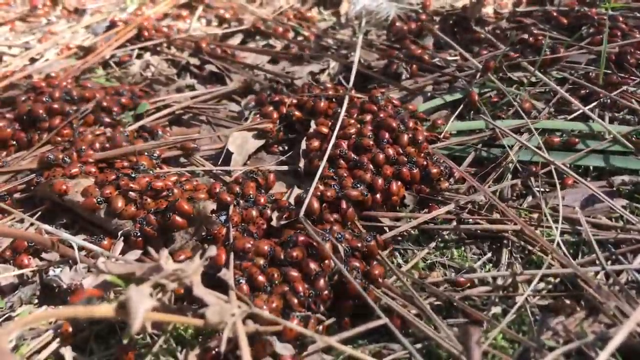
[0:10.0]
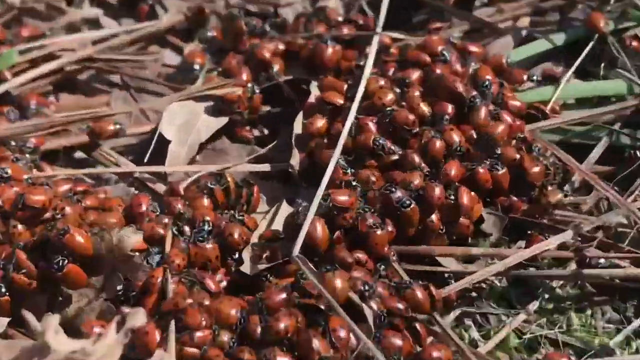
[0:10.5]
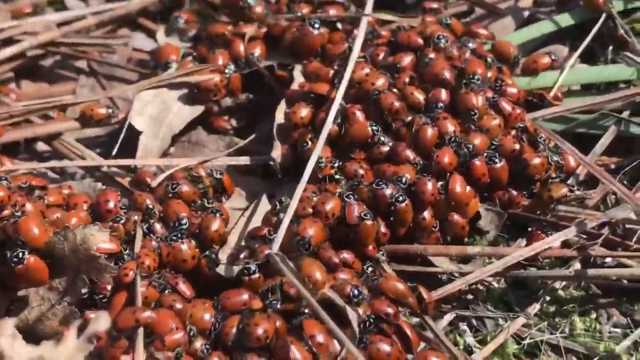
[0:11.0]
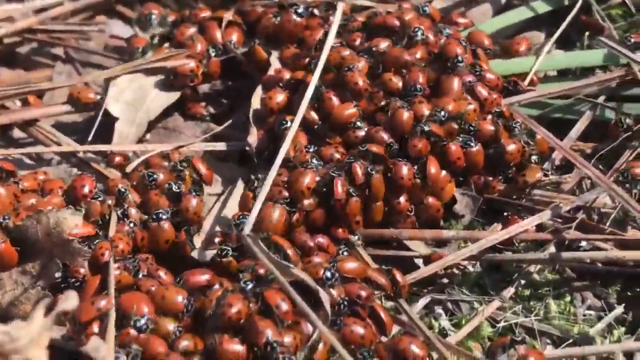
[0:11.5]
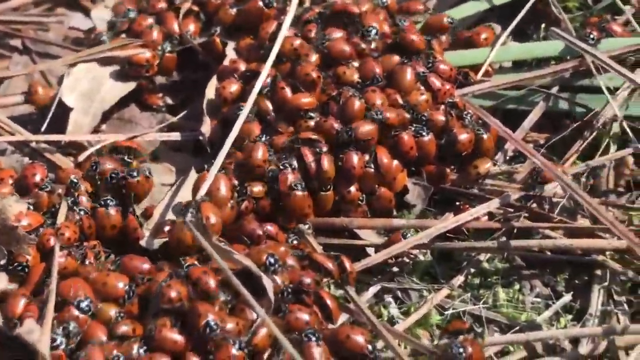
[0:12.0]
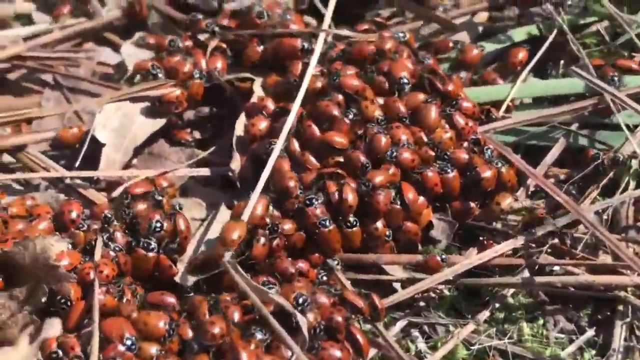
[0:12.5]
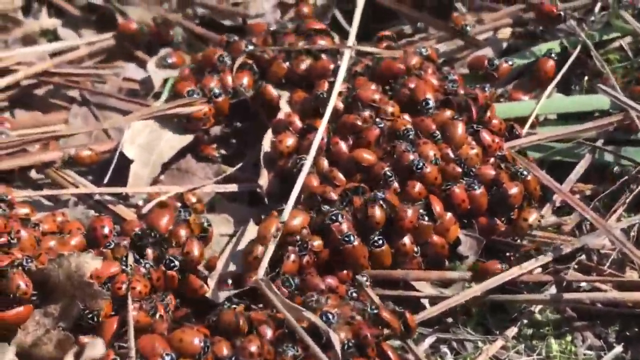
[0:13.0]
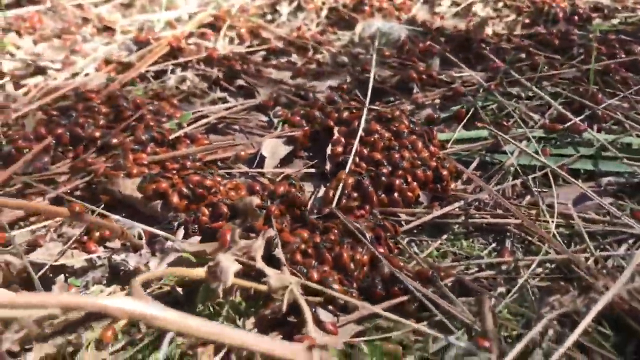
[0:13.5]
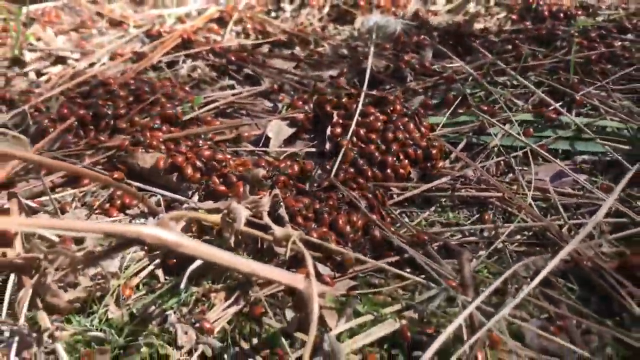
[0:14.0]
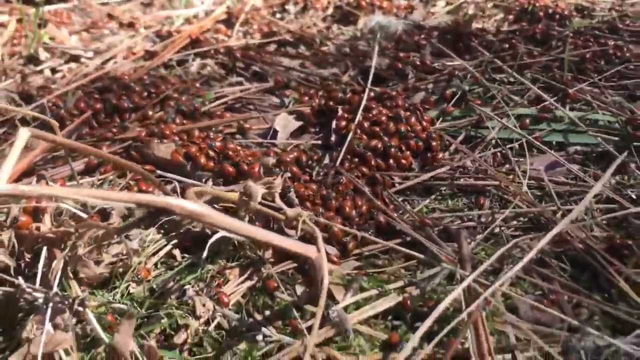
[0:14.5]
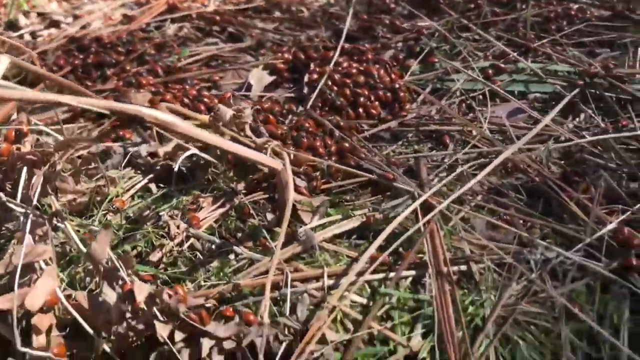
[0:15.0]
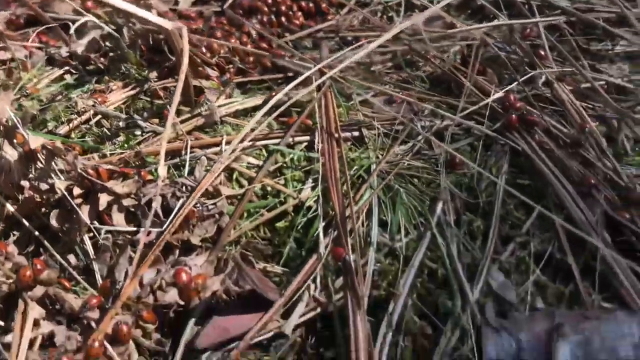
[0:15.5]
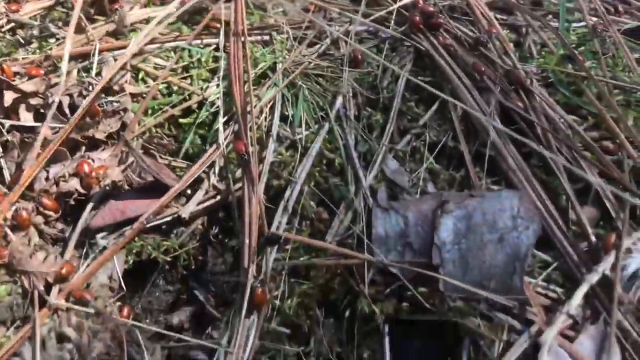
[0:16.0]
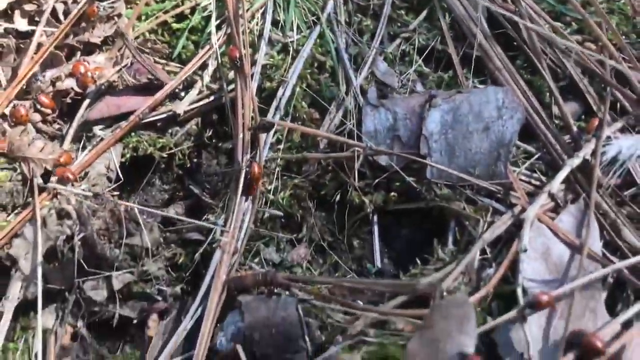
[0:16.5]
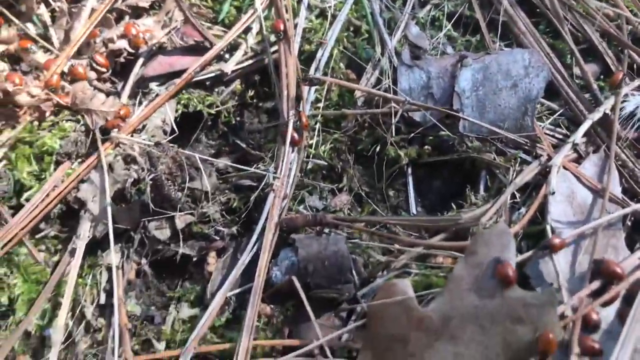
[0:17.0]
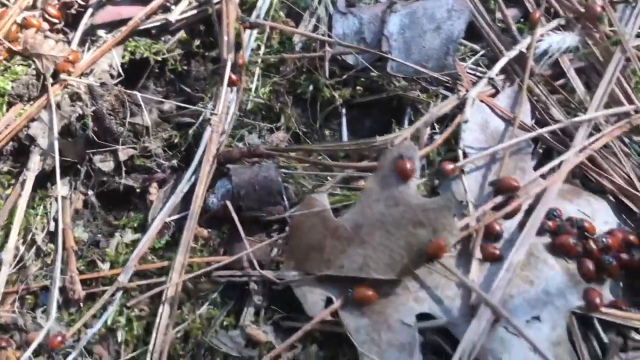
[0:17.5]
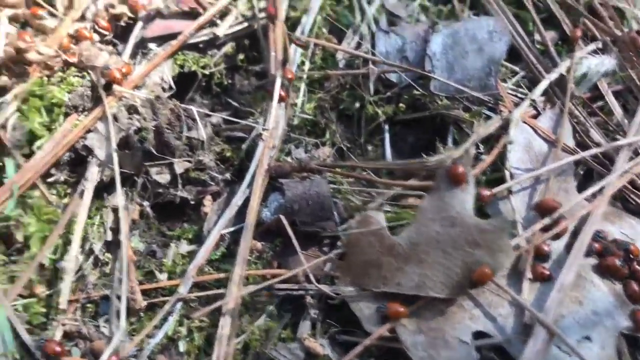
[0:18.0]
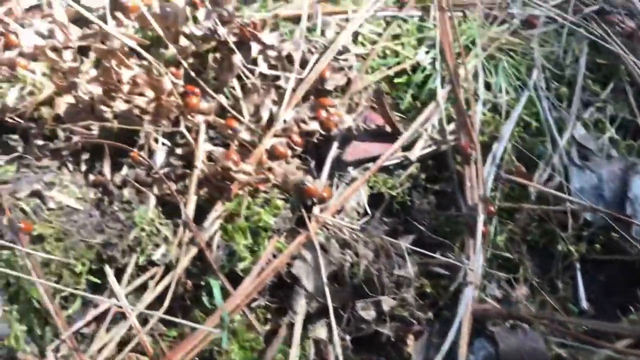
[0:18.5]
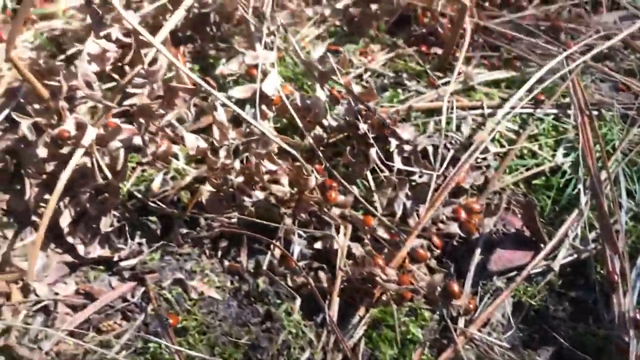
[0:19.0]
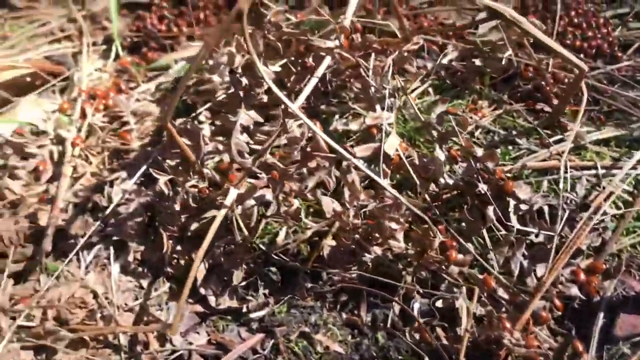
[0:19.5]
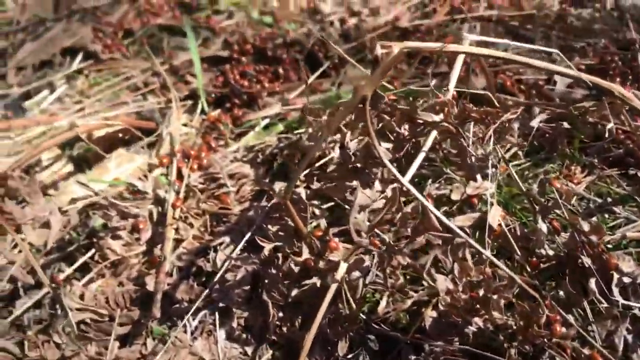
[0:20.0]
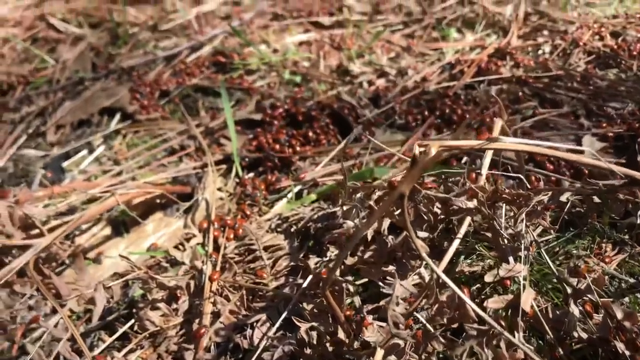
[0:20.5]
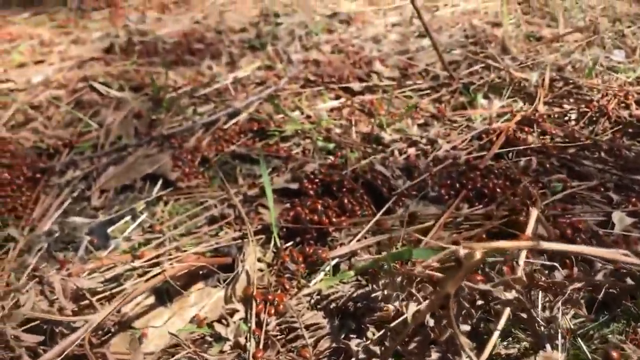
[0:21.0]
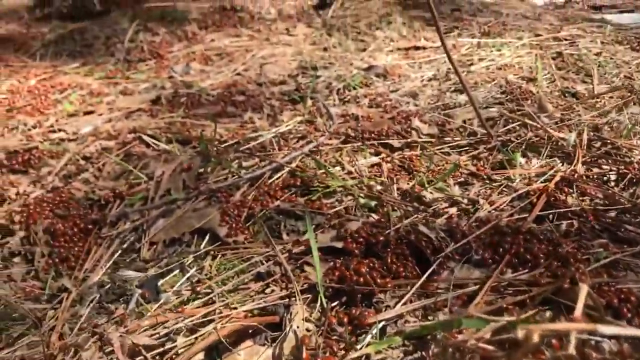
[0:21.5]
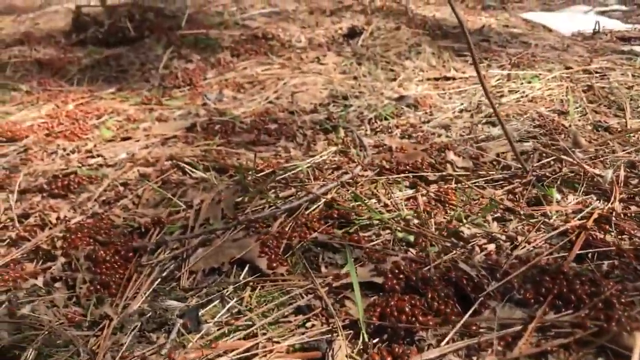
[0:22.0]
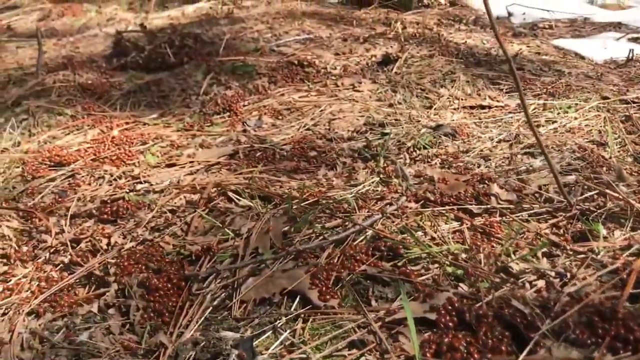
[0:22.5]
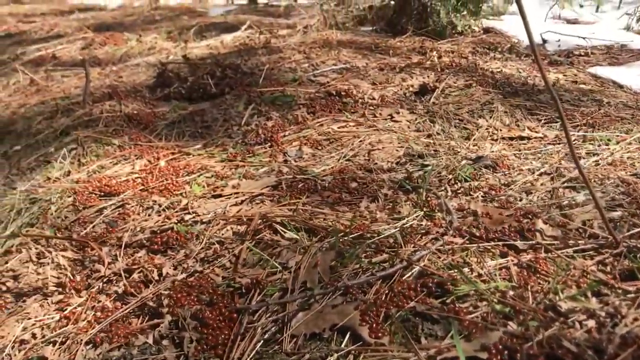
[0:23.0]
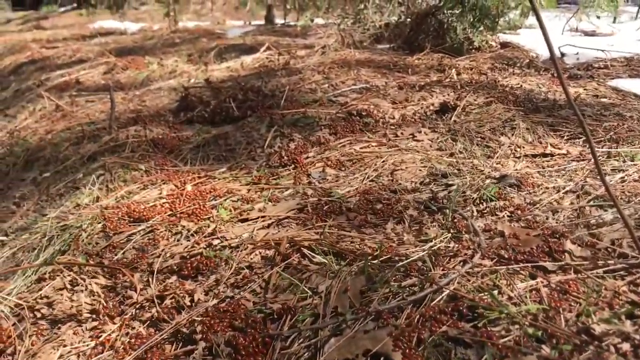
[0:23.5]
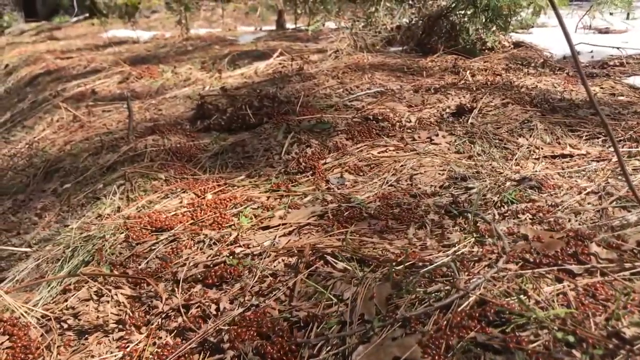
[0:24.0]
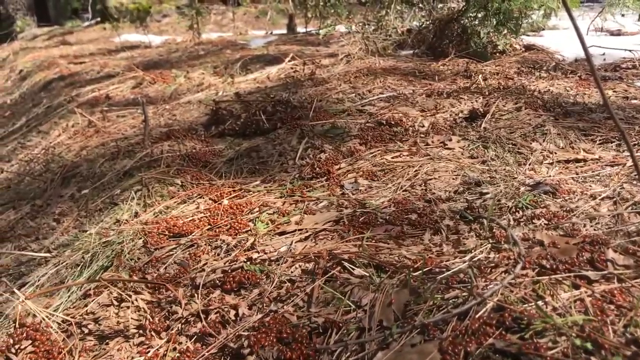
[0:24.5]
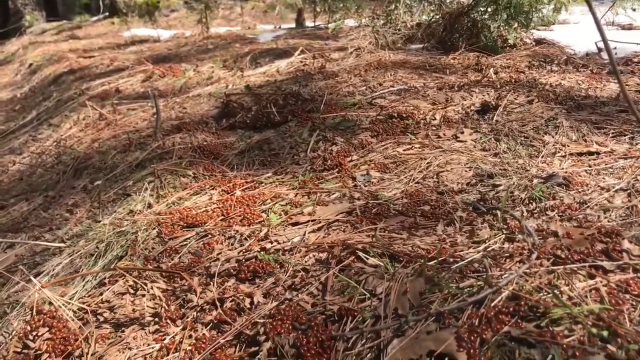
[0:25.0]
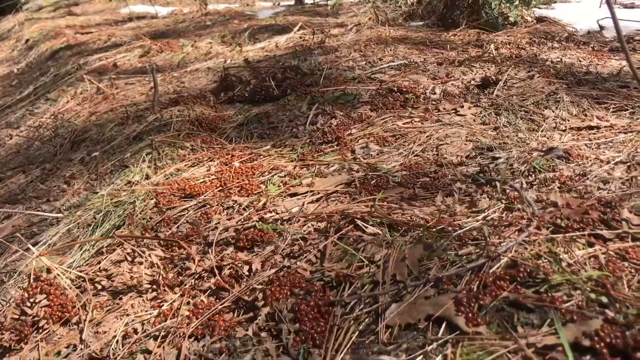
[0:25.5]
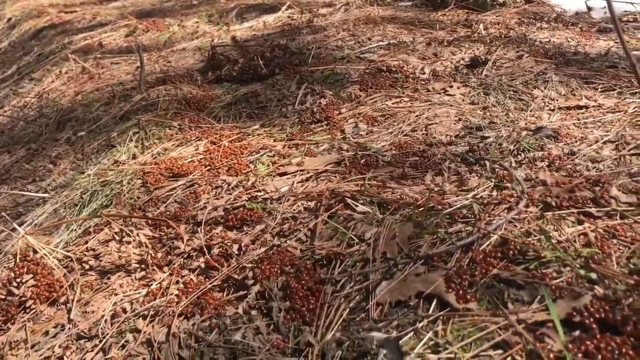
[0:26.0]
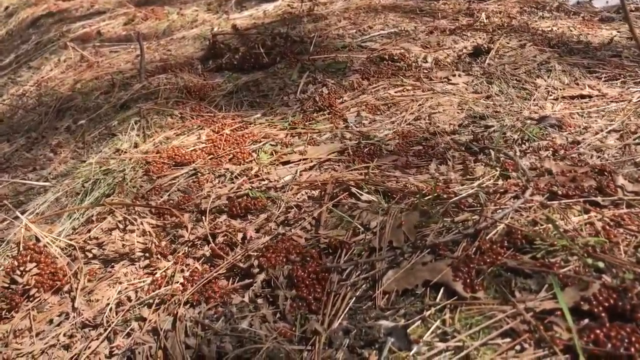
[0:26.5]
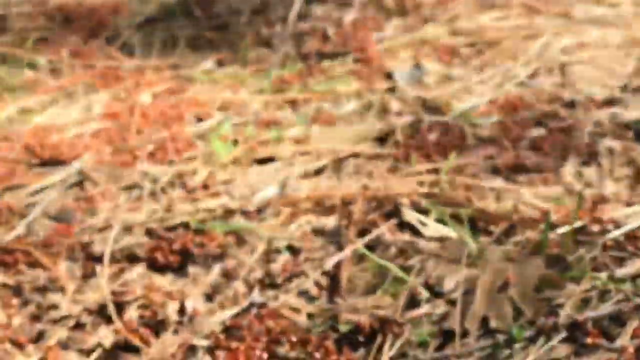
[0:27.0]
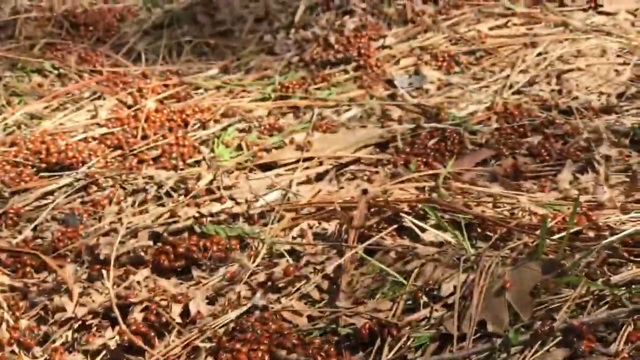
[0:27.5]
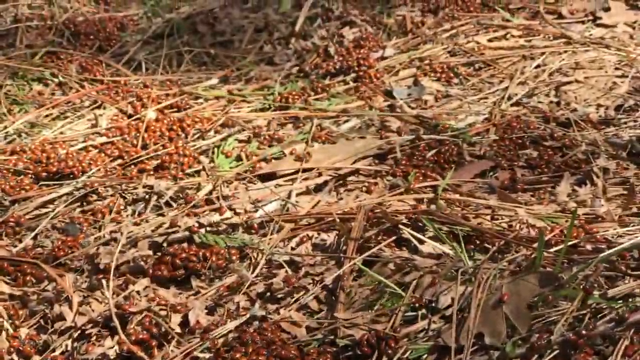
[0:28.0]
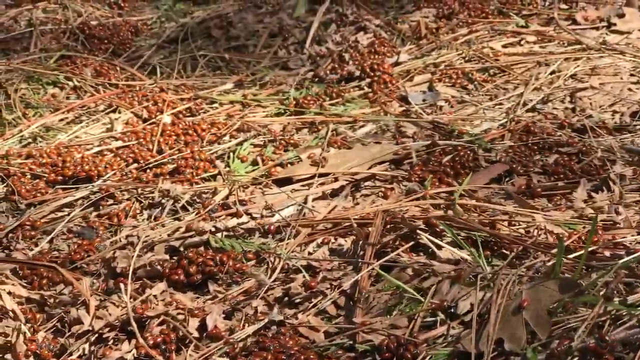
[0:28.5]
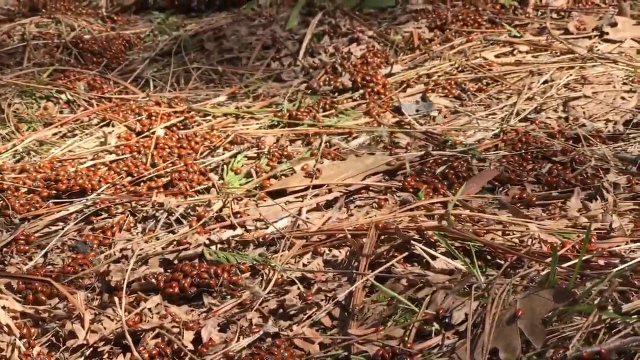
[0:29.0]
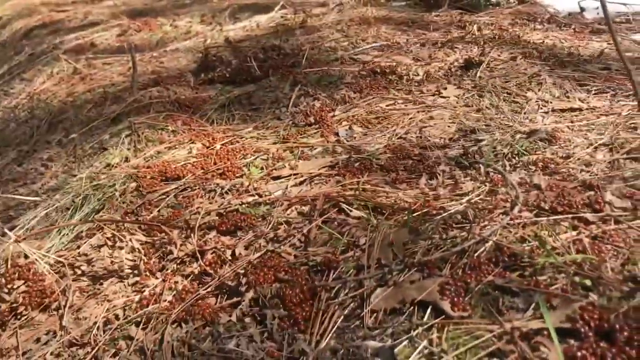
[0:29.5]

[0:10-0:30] The camera focuses on a group of the red, kidney-bean-like bugs as they cluster in one big group around small brown twigs and fallen bits of grass that are also visible in the area. The bugs cluster around each other, almost crawling on top of each other, as the cameraman zooms in further to show them at a more macro level. The bugs have little black heads, what look to be tiny pincers at the front, and dots like those on a ladybug. Some are redder than others, while some are more brown. The camera then pans away from the group to show a number of holes and tunnels in the ground, which seem to be nests where the bugs probably live, before panning up to show the bugs on a wider scale: what looked like little bits of plant fallen on the ground are revealed to be large, swarming masses of the bugs. There are thousands or tens of thousands of bugs everywhere across the field.